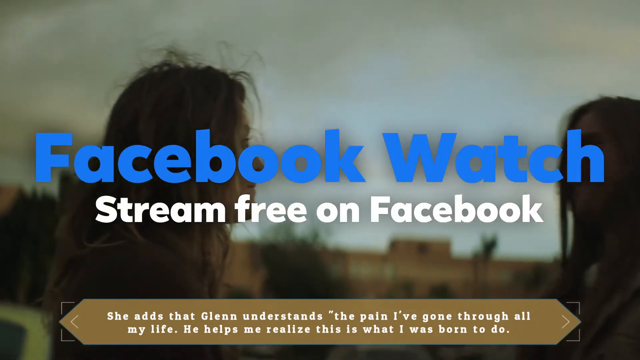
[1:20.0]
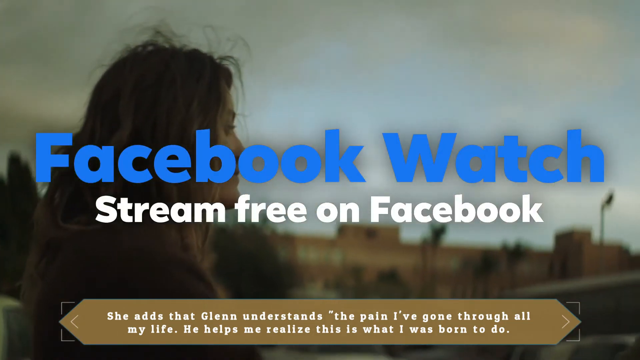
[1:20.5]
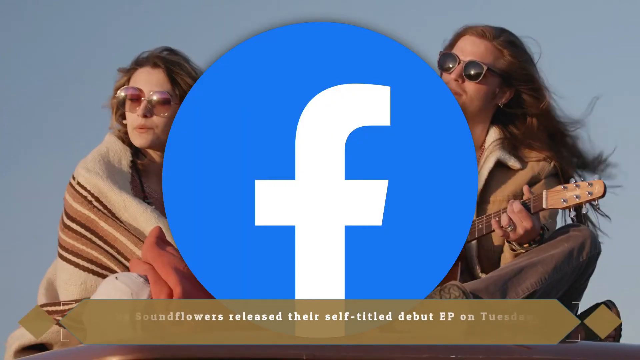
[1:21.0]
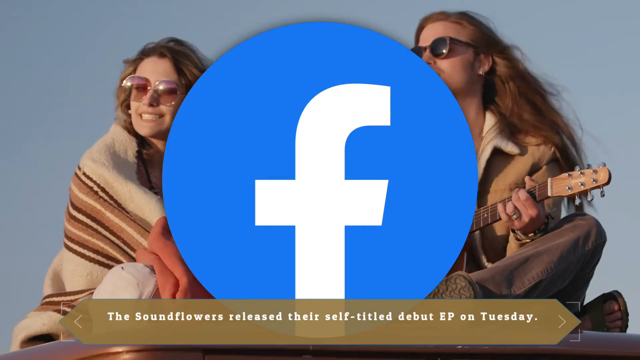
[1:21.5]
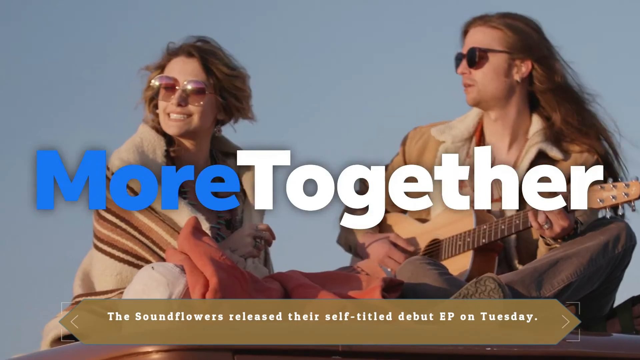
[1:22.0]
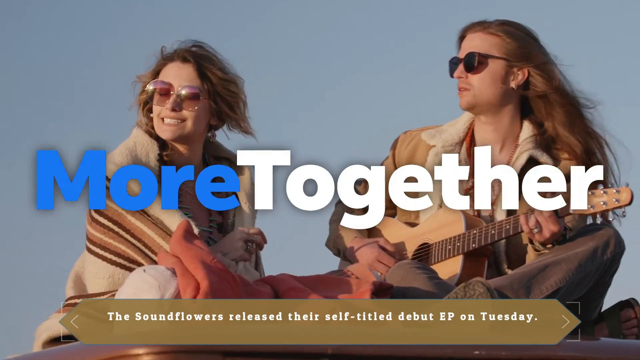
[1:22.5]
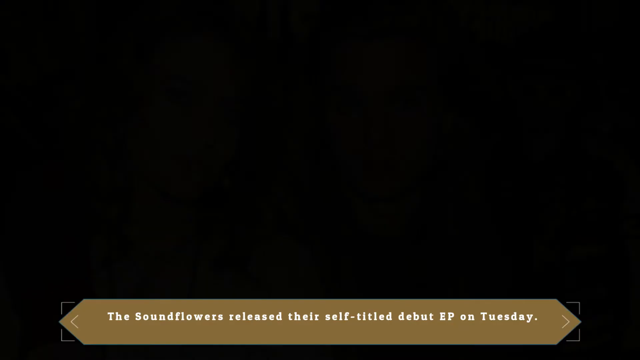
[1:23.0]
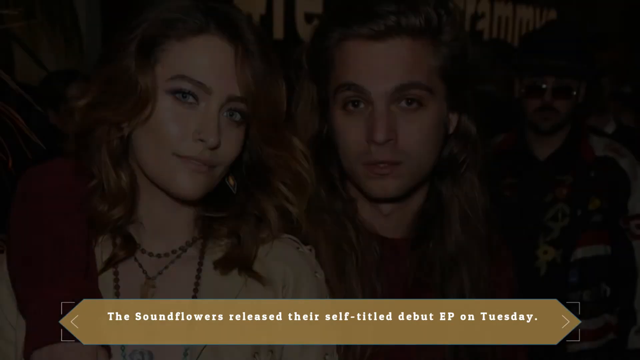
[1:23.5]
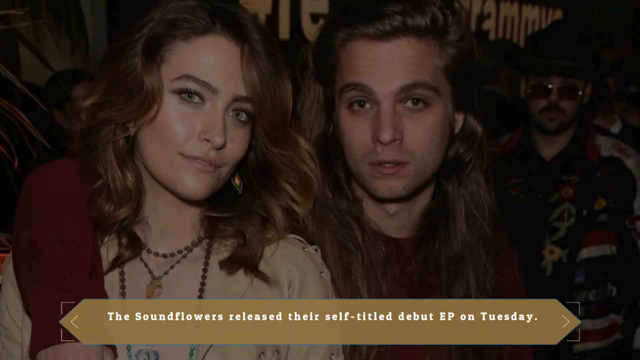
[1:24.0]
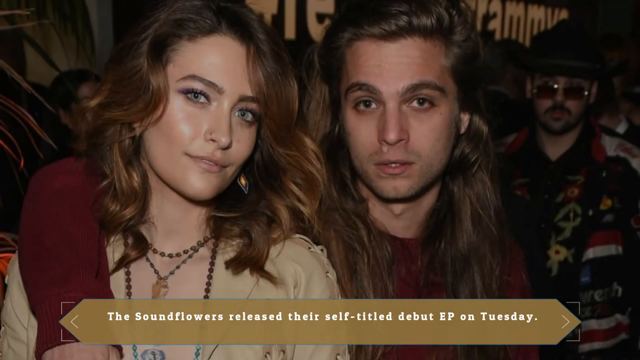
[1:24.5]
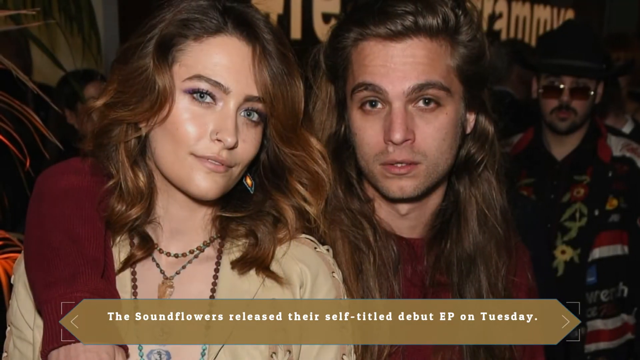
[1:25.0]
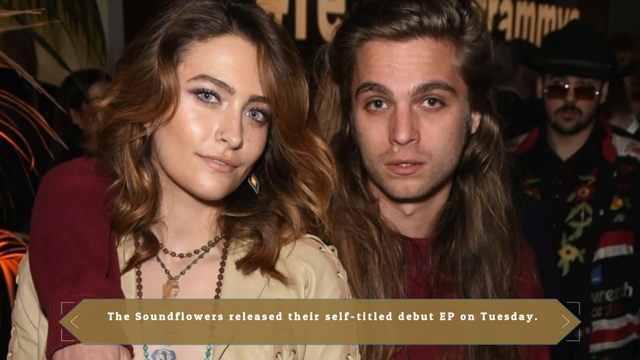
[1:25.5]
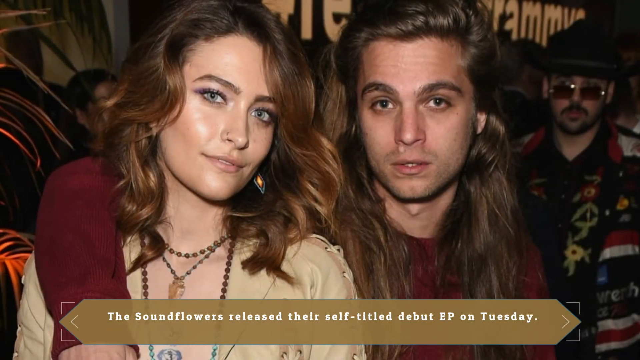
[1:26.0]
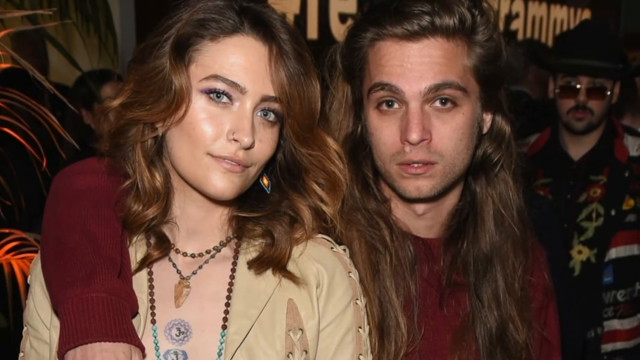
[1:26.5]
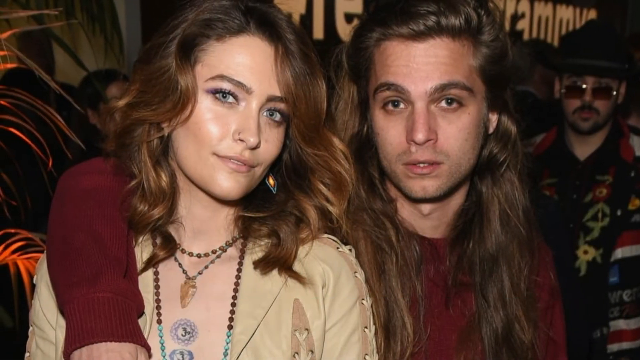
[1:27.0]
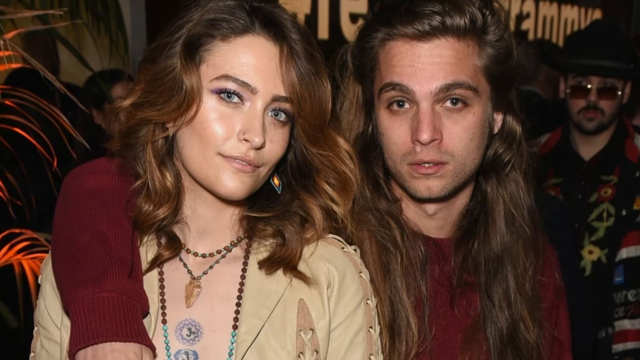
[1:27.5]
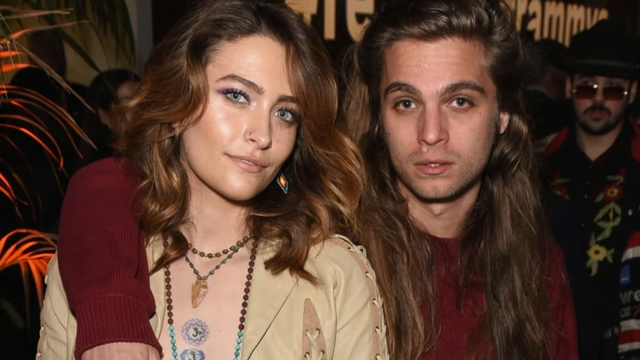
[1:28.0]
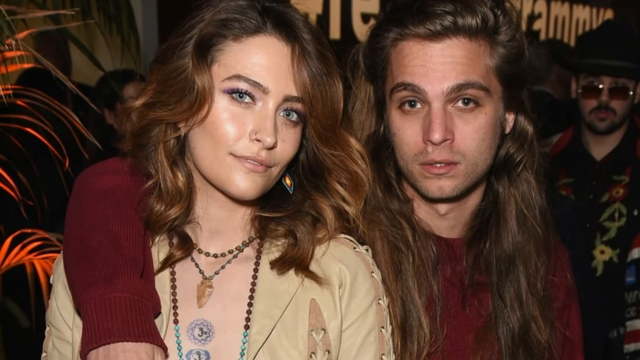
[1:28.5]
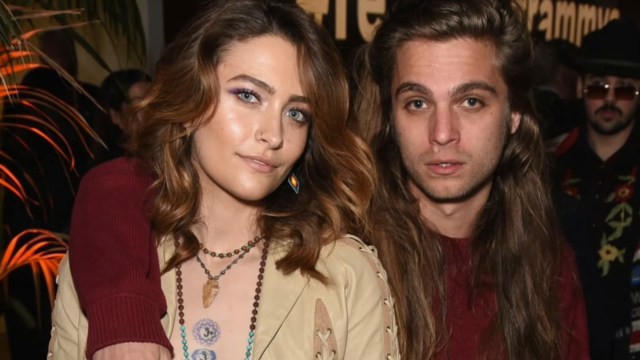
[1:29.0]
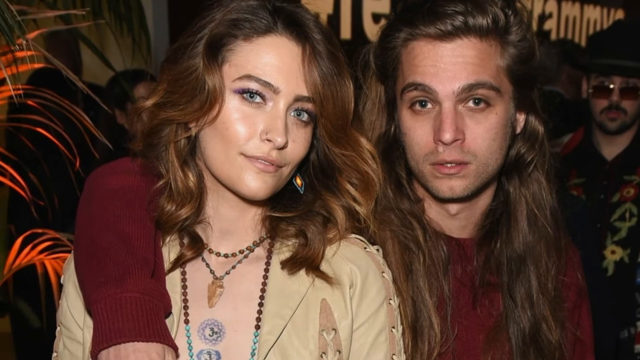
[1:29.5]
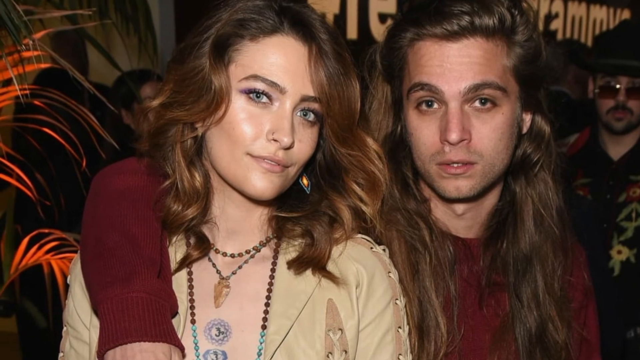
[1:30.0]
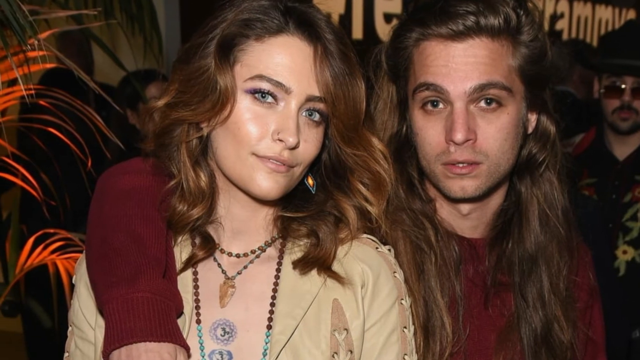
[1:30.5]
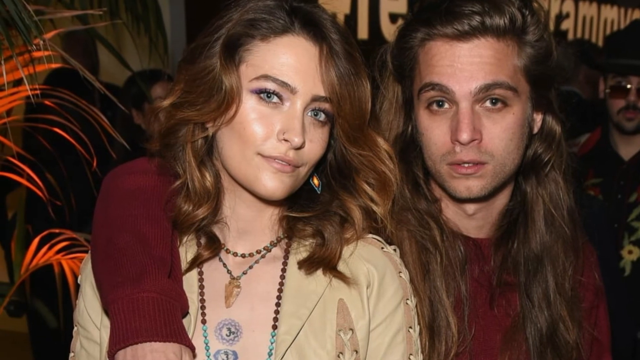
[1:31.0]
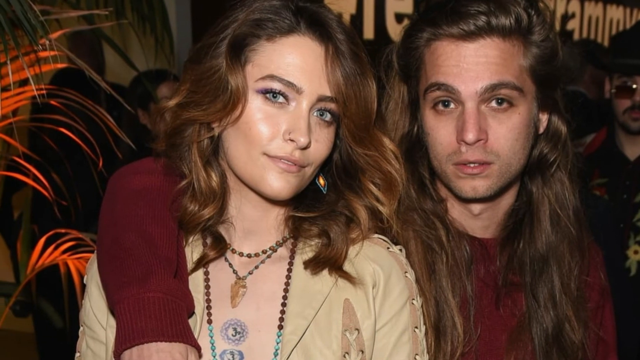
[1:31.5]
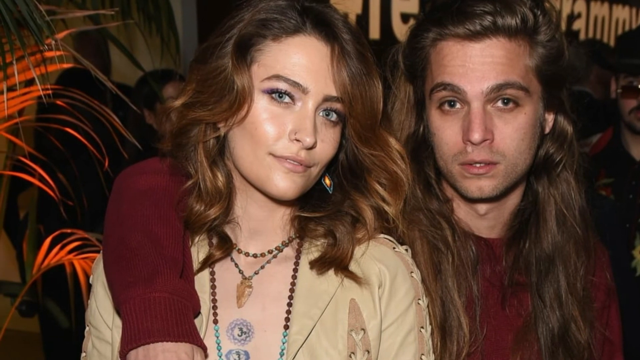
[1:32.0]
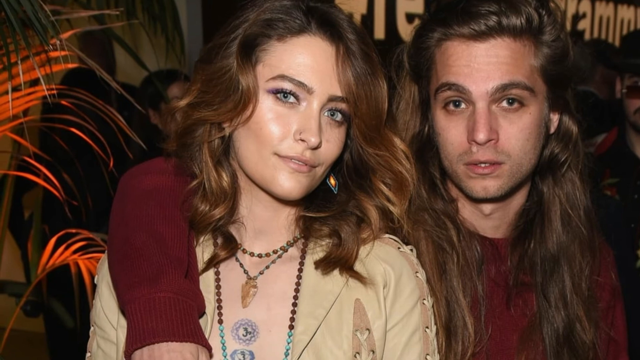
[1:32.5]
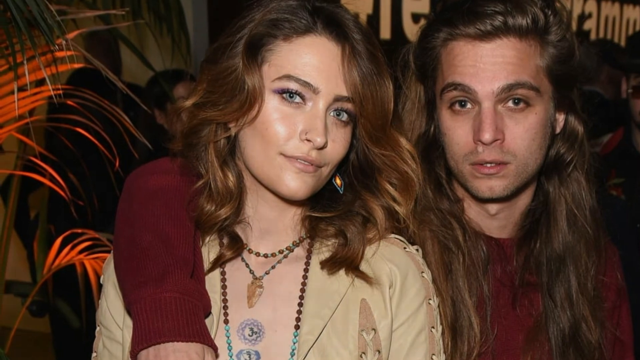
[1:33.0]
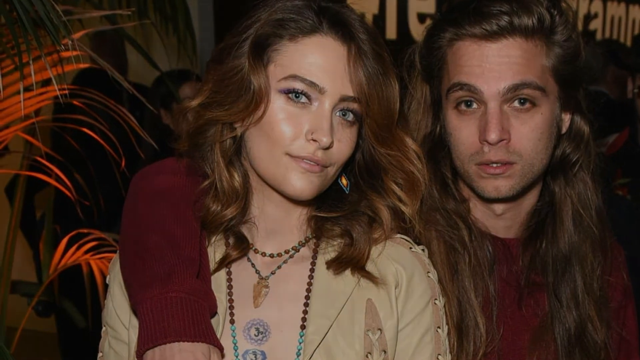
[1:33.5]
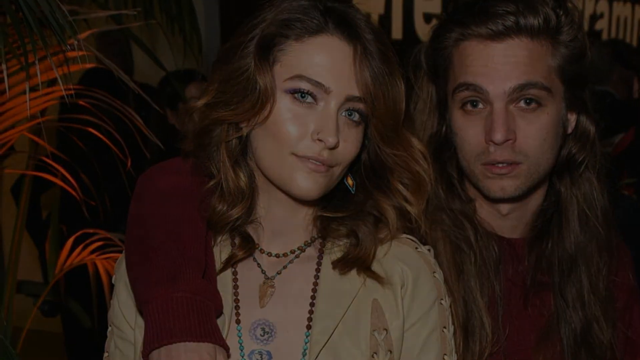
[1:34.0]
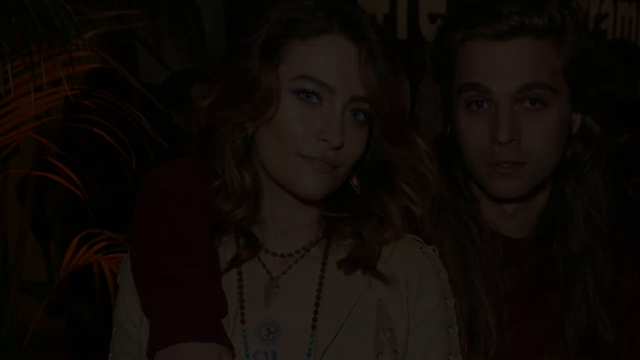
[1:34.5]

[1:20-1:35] Both of them are shown, faded because words run over their faces. Blue text reads "Facebook Watch," with the first letter of each word capitalized, and white text says "stream free on Facebook." Text reads "the Sound Flowers released their self-entitled debut EP on Tuesday." Then a picture shows the two of them together: he wears what appears to be a burgundy sweatshirt, and his right arm hangs around her right shoulder. Her head is tilted toward him, toward the right side of the frame, which is her left as she faces the camera. After the picture goes off, the screen is completely black.